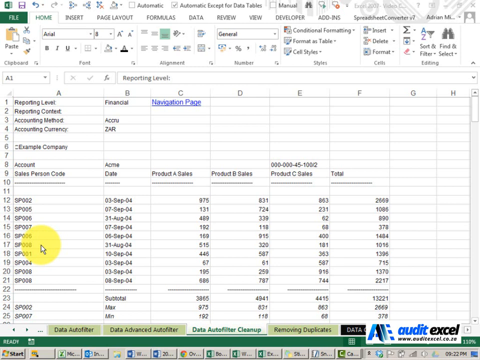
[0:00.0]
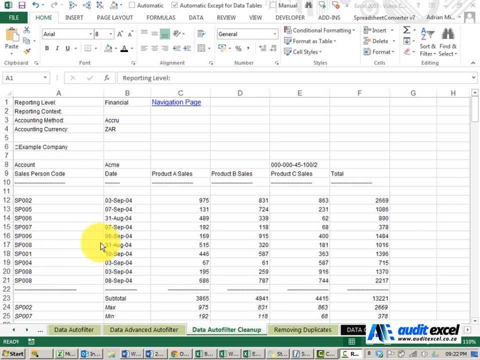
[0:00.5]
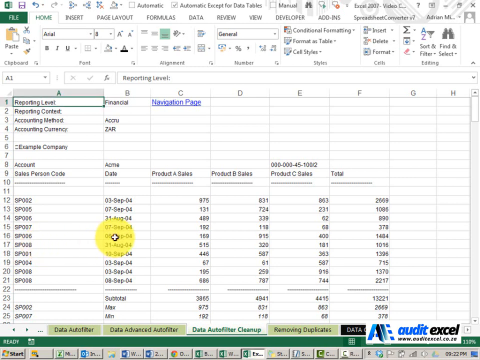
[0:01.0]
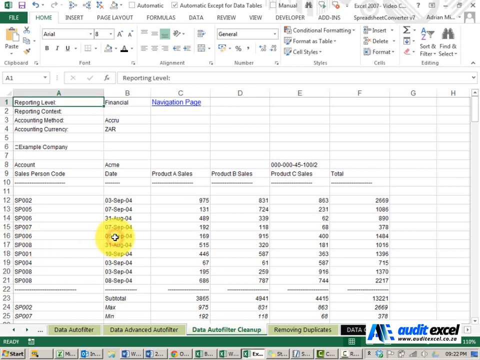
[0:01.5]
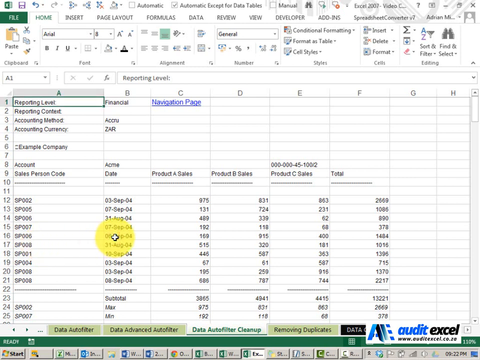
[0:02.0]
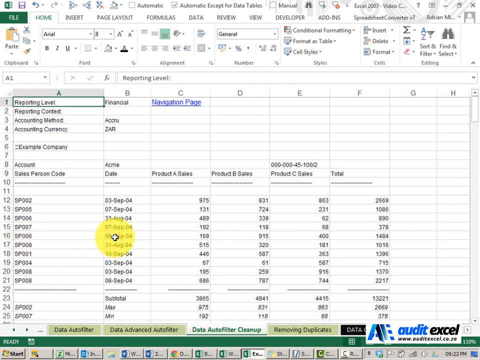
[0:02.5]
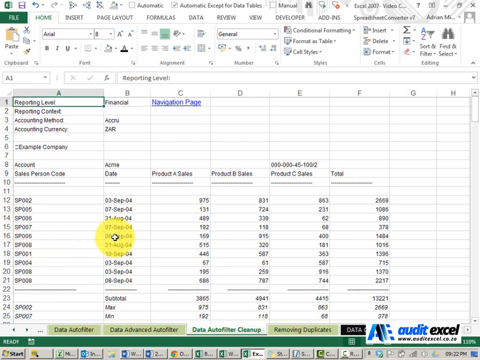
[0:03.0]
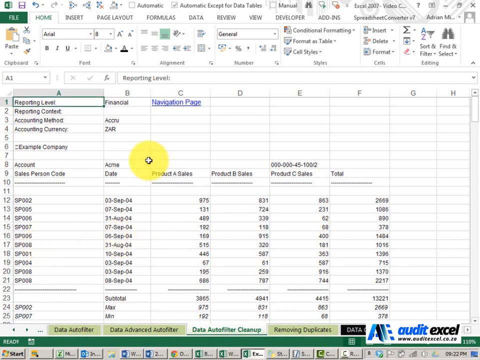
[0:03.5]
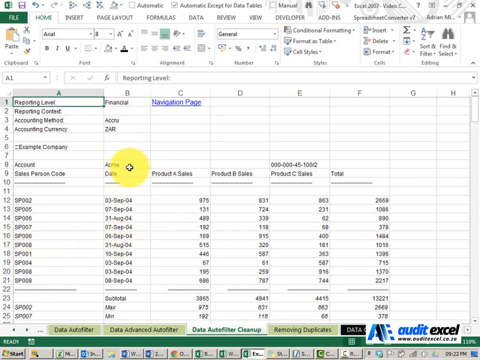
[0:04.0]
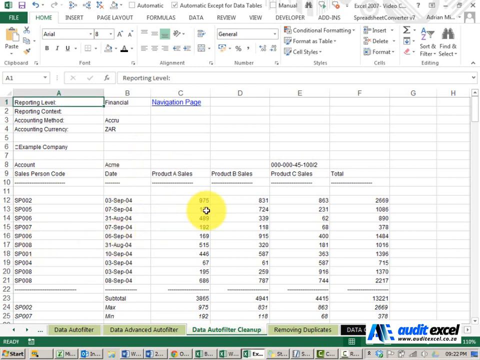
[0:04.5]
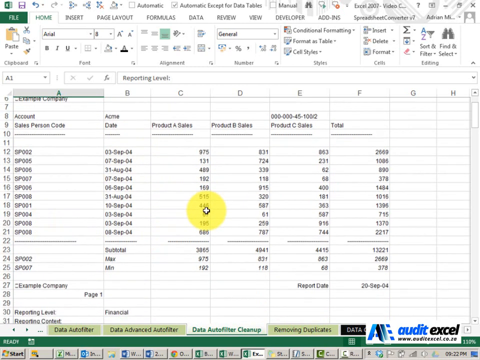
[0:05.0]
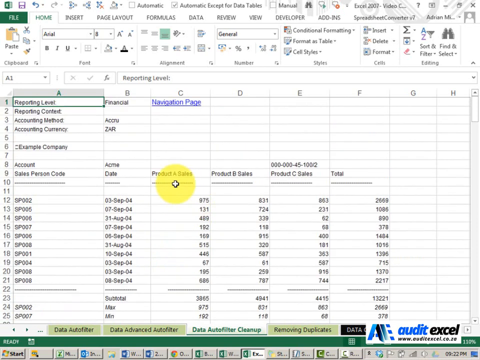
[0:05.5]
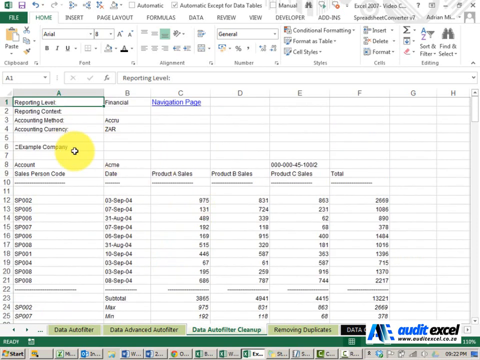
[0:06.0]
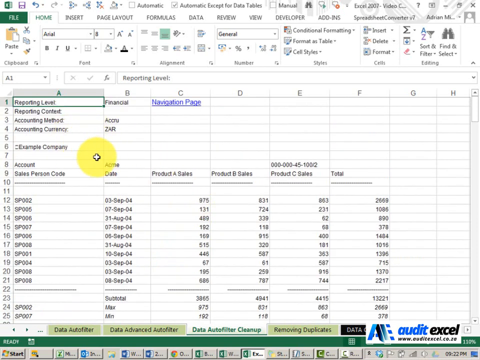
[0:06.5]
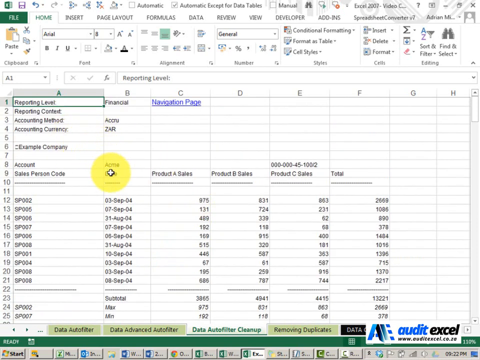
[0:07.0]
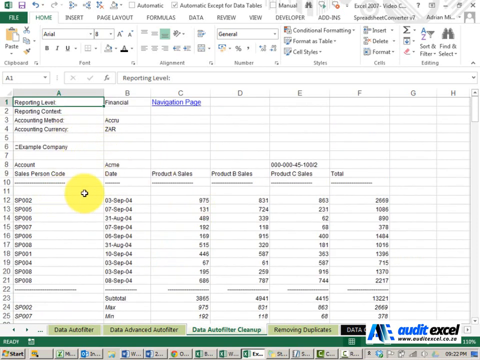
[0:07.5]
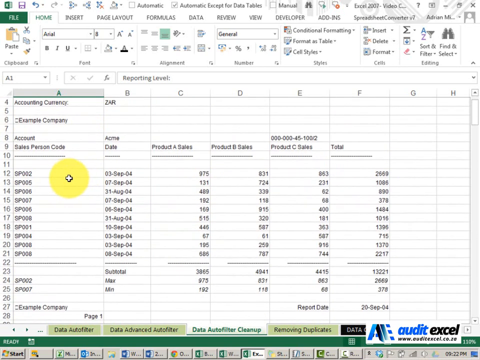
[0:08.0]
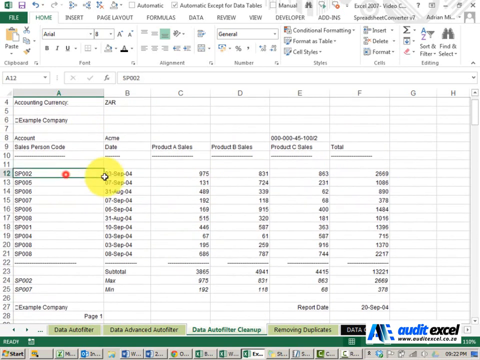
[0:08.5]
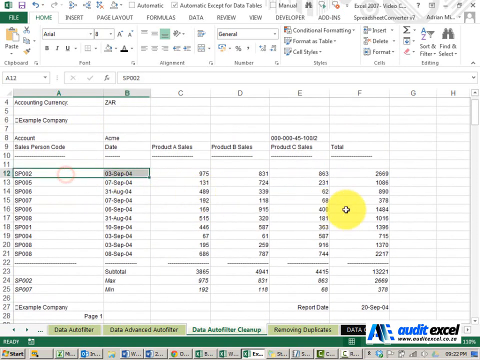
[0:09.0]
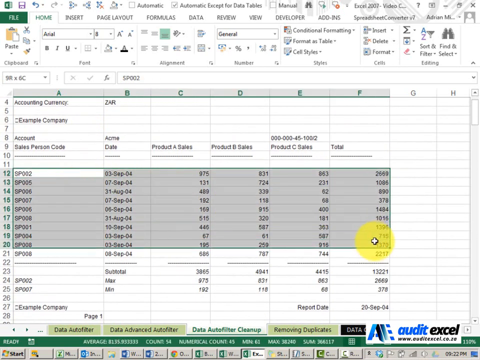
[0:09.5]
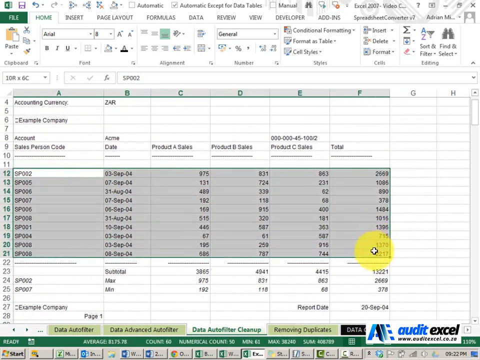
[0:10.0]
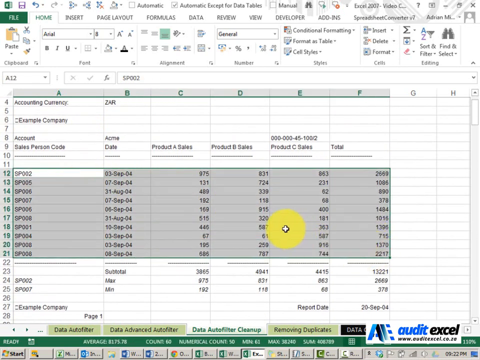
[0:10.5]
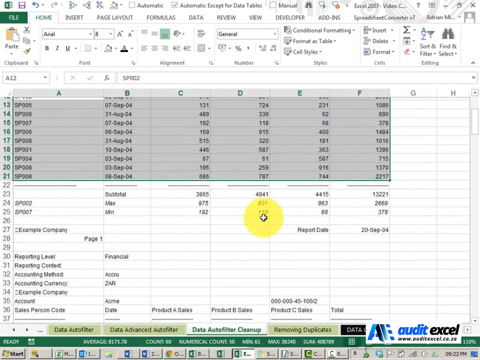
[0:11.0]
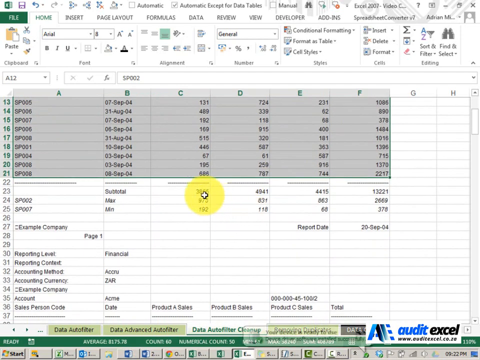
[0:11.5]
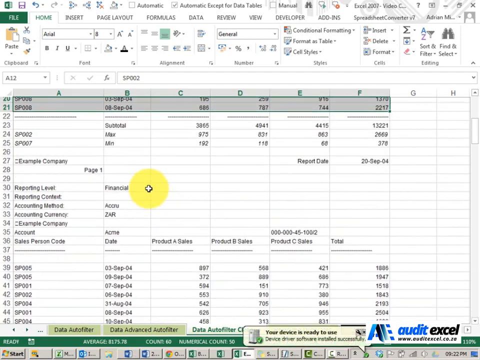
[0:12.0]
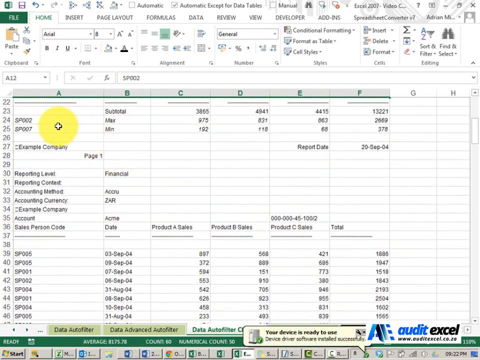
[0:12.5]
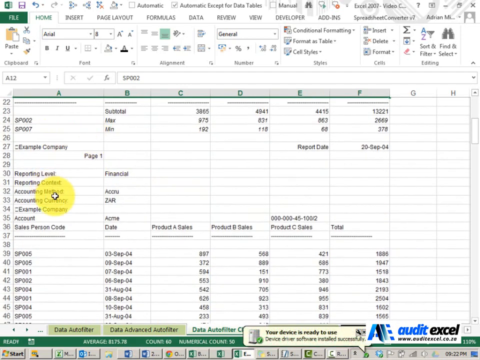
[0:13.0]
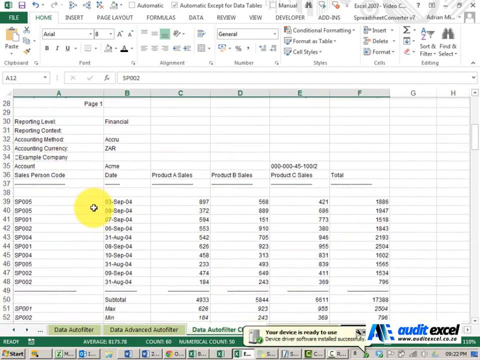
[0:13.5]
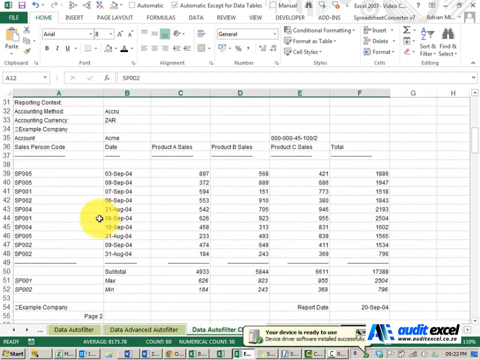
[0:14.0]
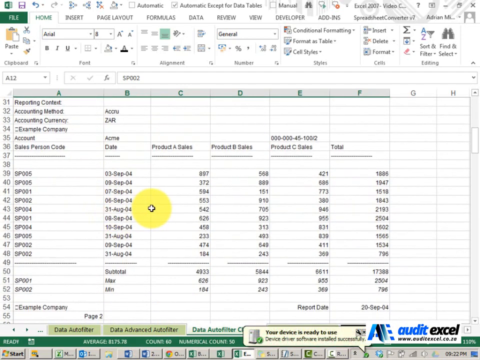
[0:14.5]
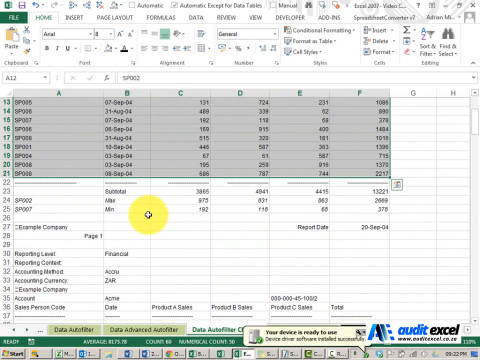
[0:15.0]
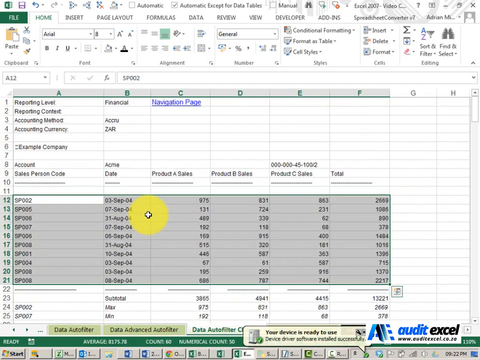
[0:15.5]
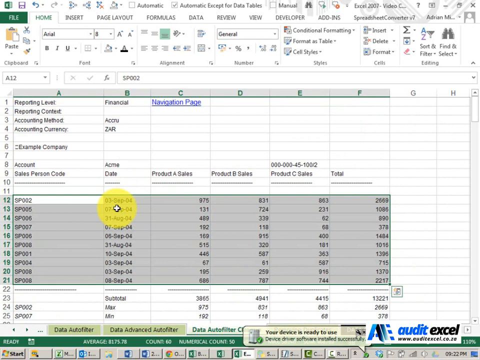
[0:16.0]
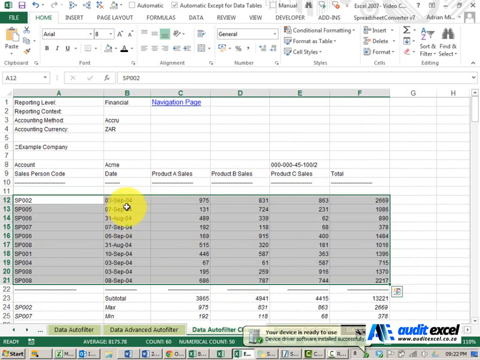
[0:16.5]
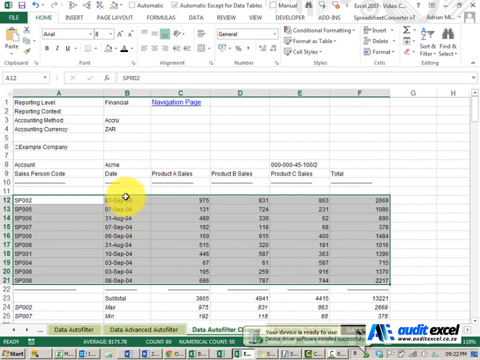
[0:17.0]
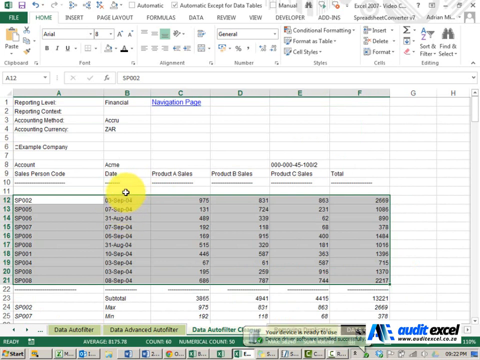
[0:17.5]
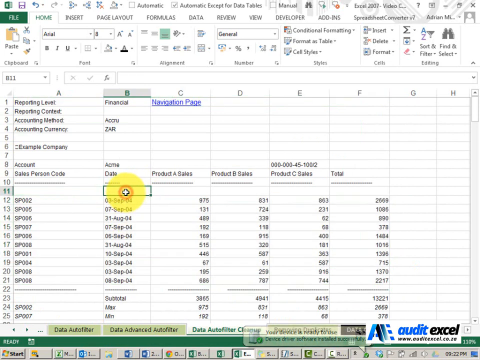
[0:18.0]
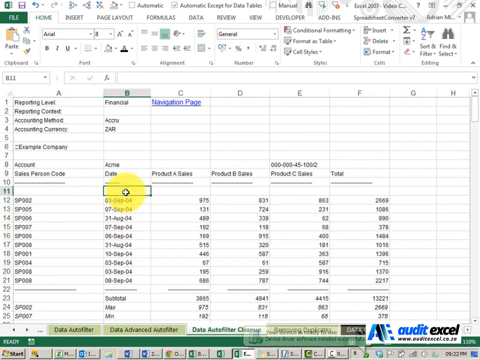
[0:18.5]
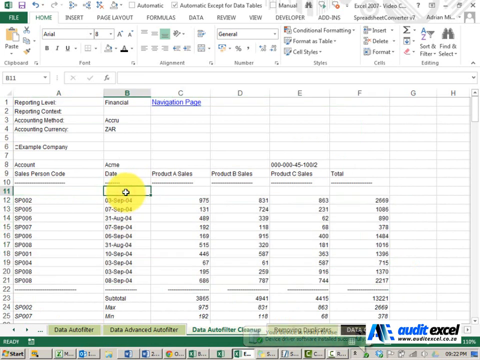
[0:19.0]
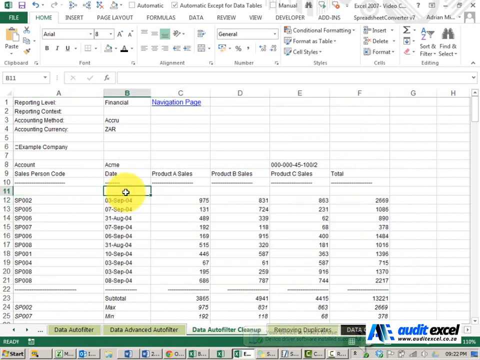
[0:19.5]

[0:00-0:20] A spreadsheet is on screen with several categories: reporting level, reporting content, accounting method and accounting currency. The currency is not dollars, the accounting method is accrual, and the reporting level is financial. Column headings include example company, account, salesperson code with various codes, ACME date, product A sales, product B sales, product C sales, and total, listing how much of each product each salesperson sold to make up a total. All of the salespeople and their sales data are highlighted, and then the selection moves down the list to show the ACME dates.